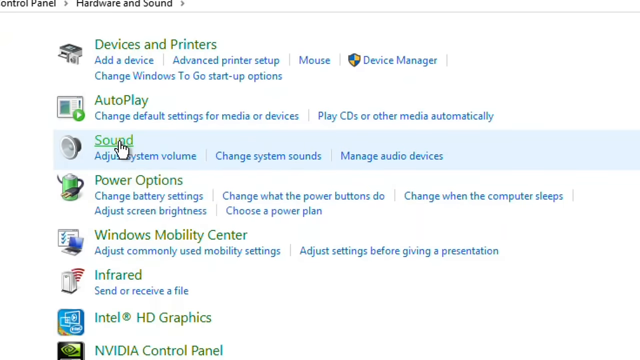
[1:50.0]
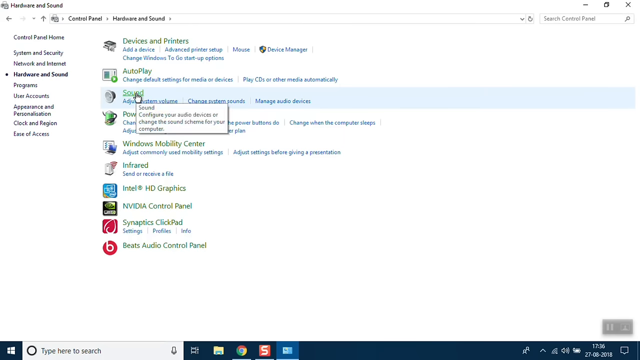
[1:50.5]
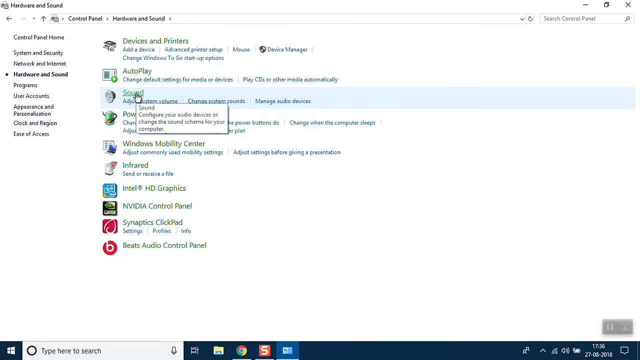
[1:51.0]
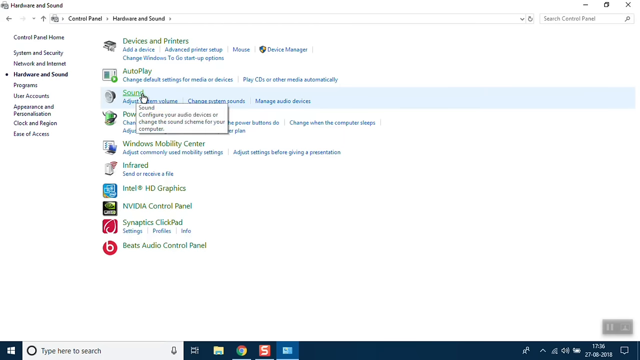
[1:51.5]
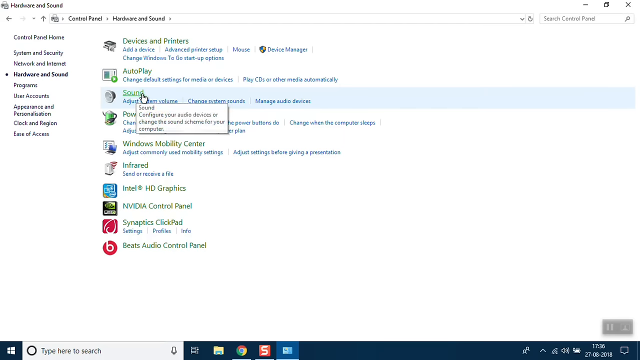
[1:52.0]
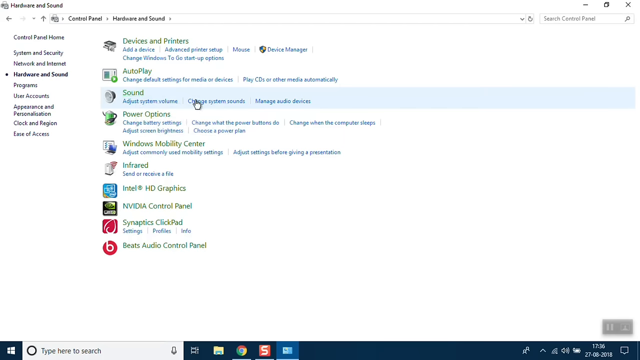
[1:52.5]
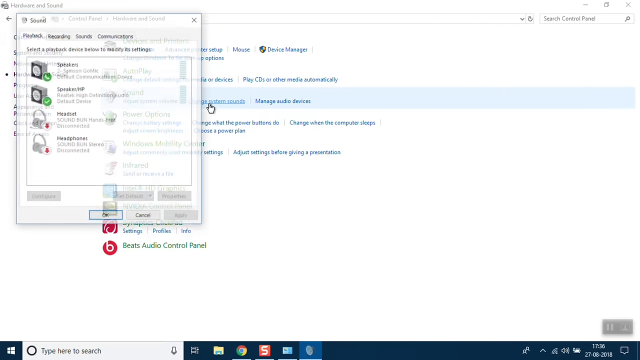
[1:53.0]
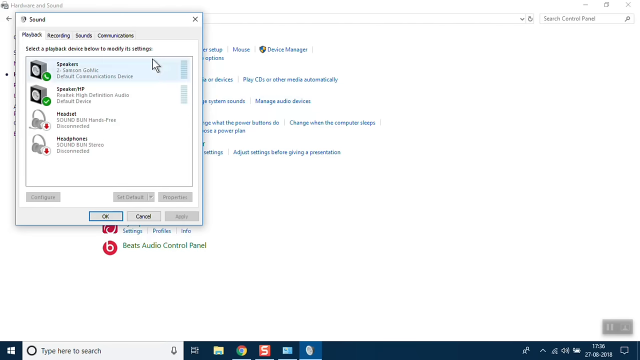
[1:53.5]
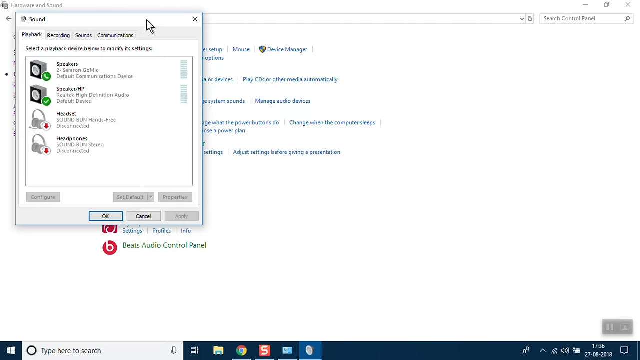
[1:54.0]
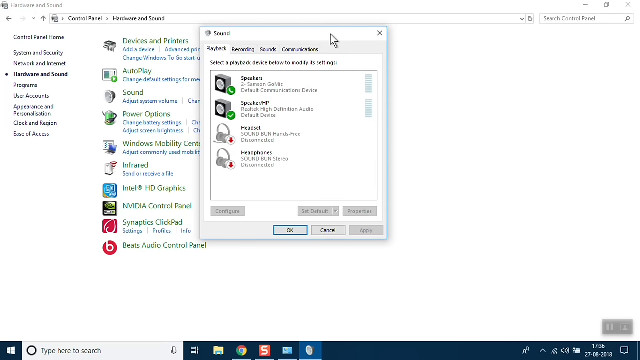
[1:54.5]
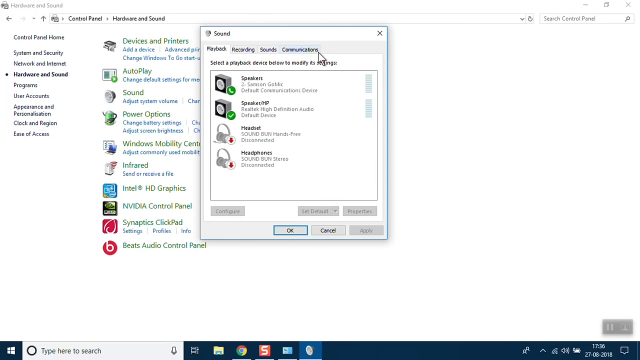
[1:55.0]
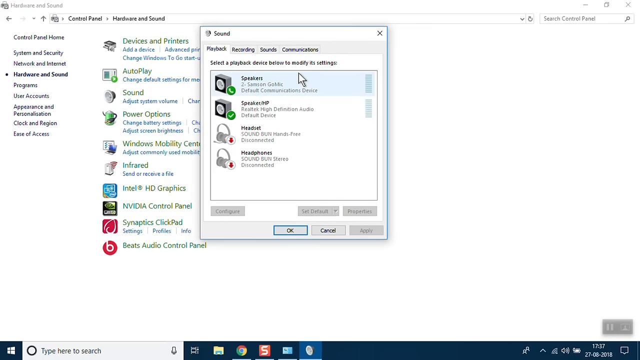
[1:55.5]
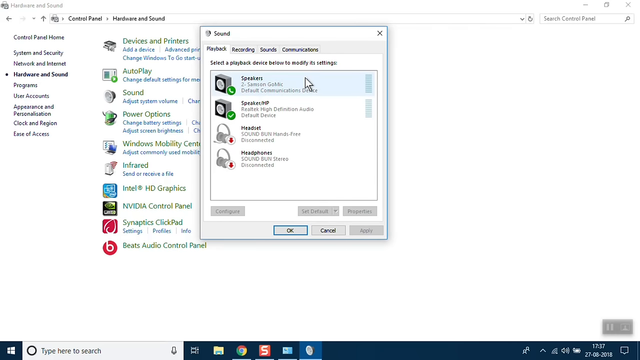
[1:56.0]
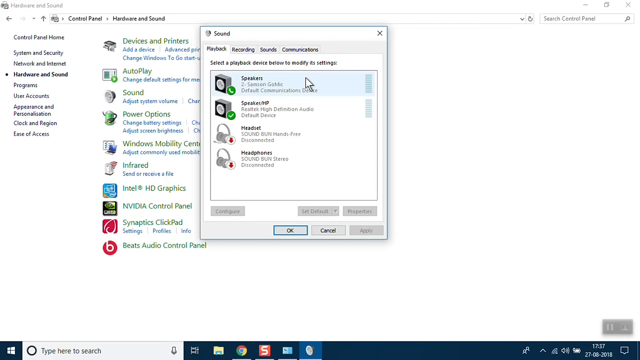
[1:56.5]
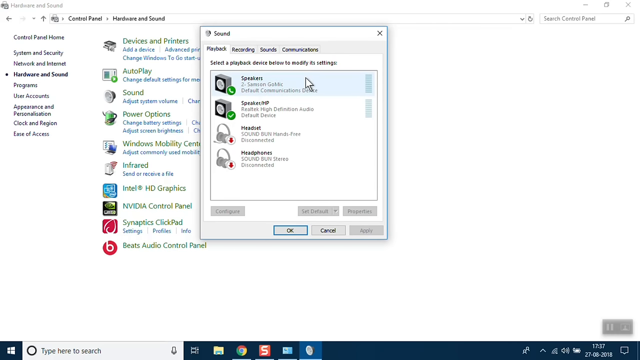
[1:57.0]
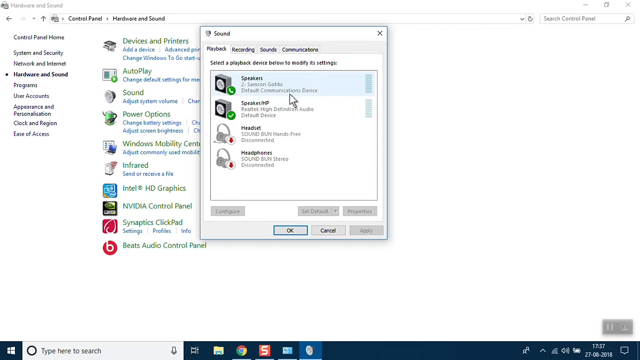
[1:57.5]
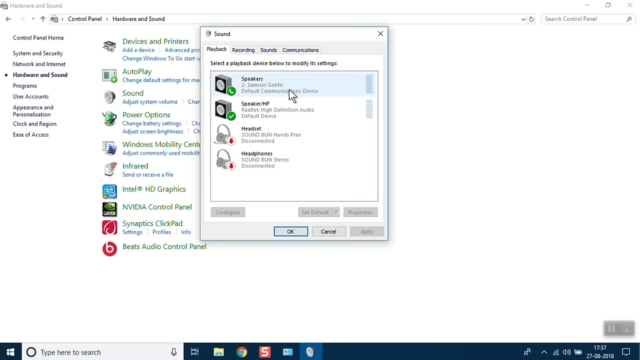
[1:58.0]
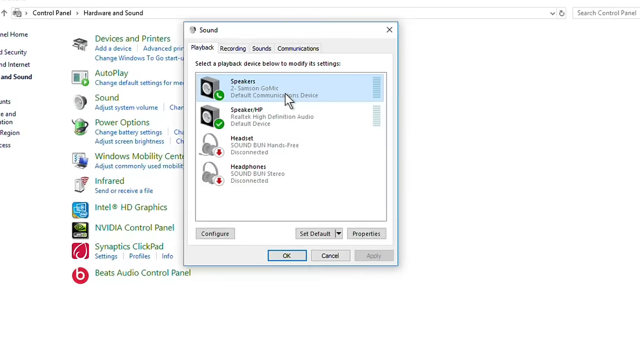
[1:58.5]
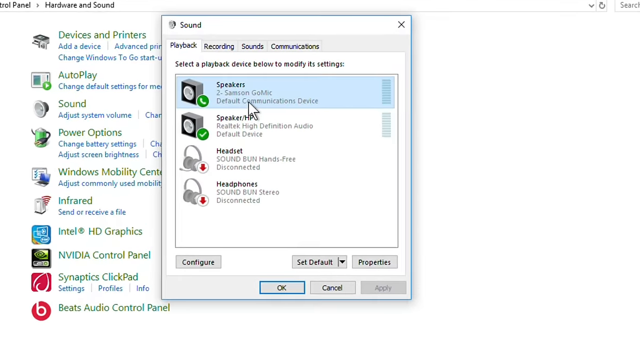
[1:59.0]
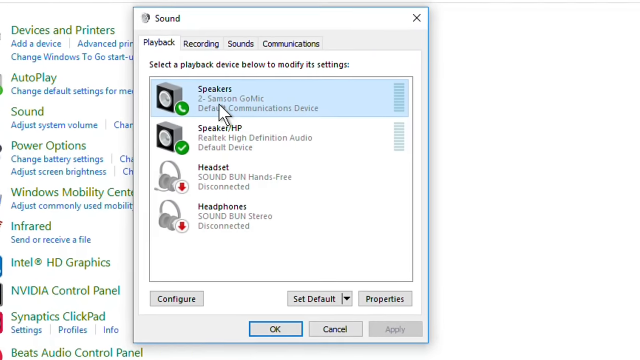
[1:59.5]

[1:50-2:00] The hand cursor hangs around "Sound" and clicks it, and a smaller window pops up, is dragged to the center of the screen, and sits over the Control Panel background. In its upper left it says "Sound" with a little icon to the left. The window has four entries, each with an icon on the left, a small header and a couple of lines of explanatory text; the top one says "Speakers". The cursor hangs on "Speakers" for a bit, which turns its background blue, and the view zooms in slightly. The cursor appears to click it, as the view goes to a new screen.